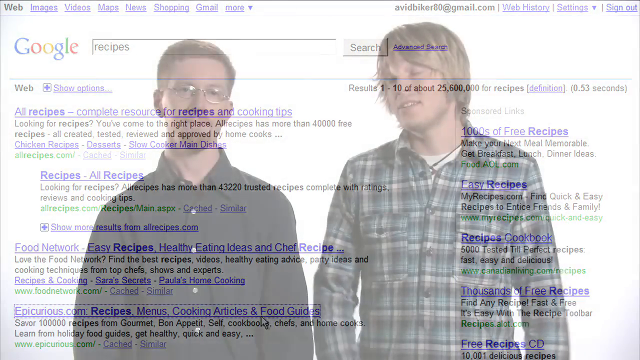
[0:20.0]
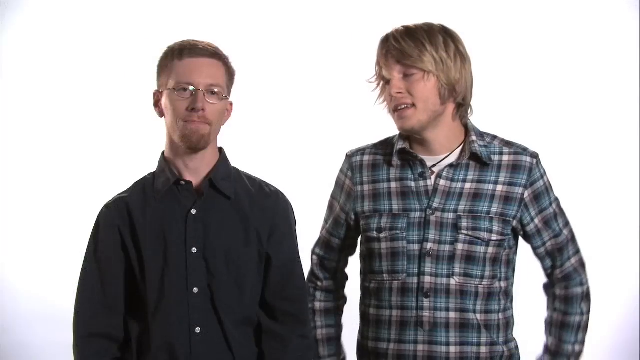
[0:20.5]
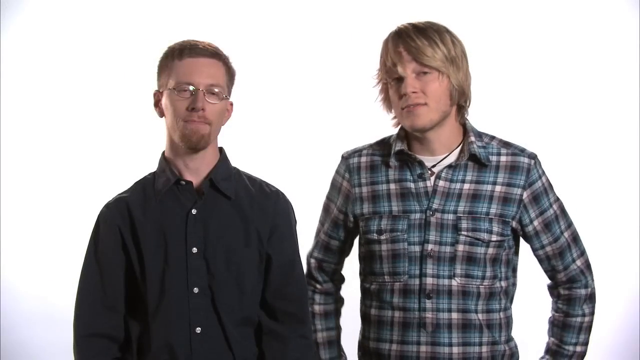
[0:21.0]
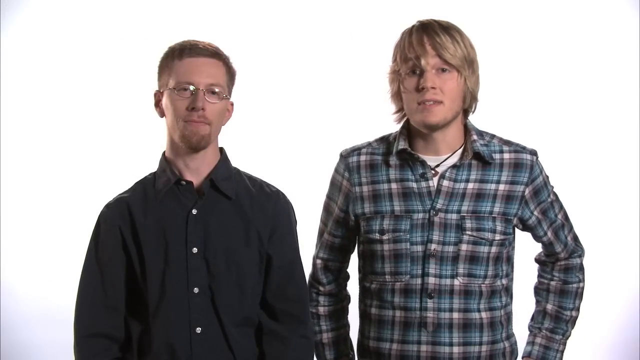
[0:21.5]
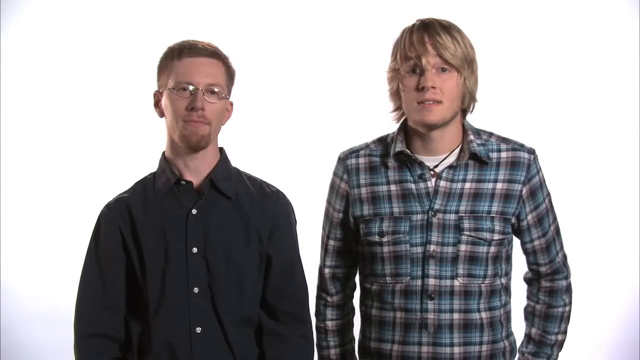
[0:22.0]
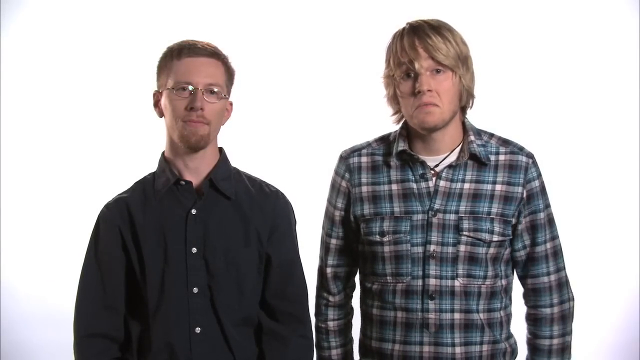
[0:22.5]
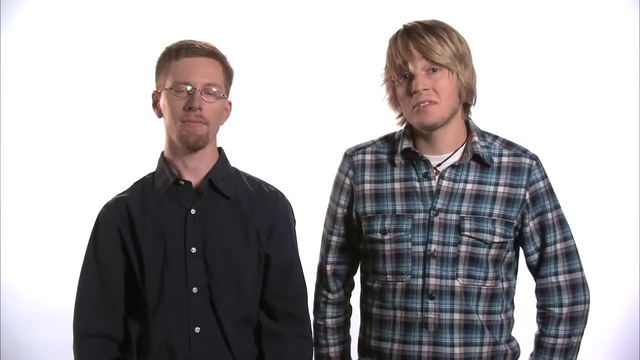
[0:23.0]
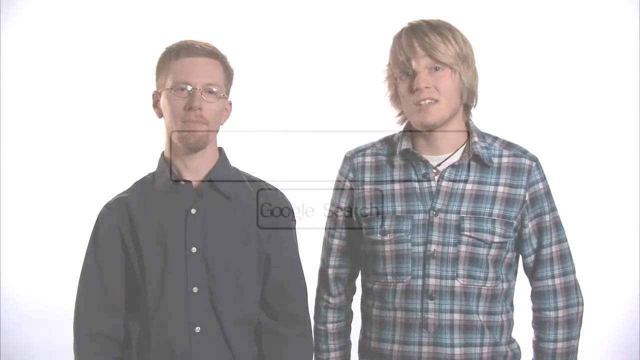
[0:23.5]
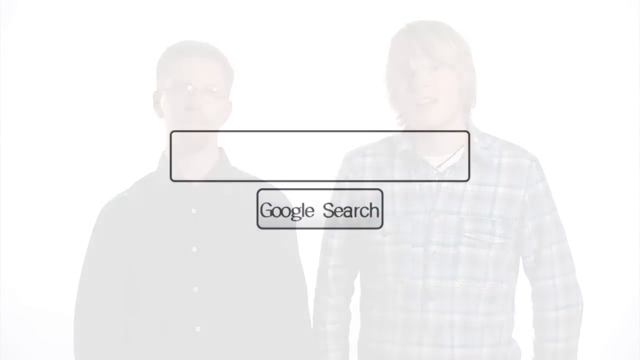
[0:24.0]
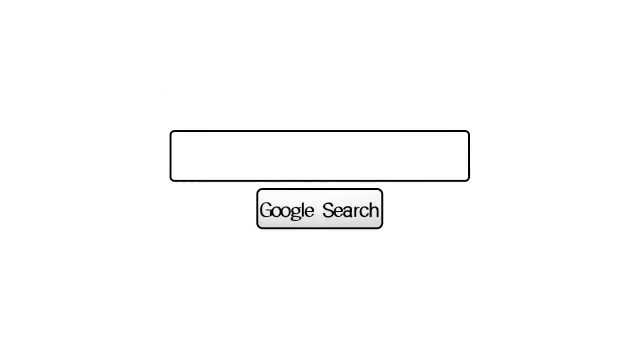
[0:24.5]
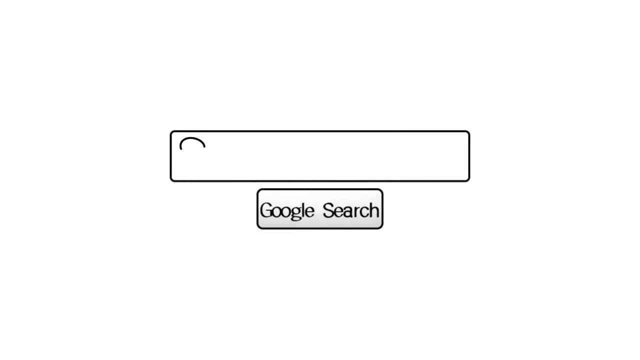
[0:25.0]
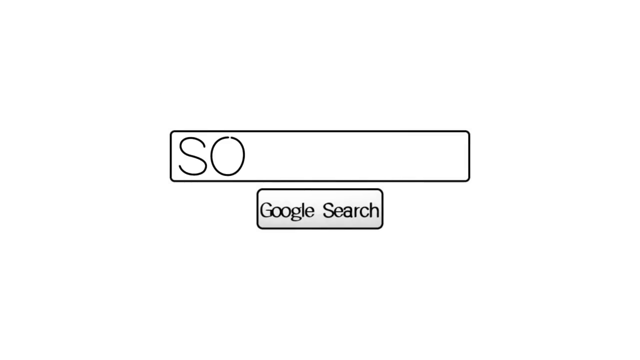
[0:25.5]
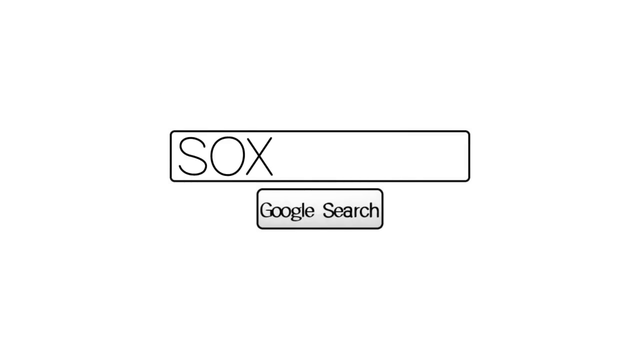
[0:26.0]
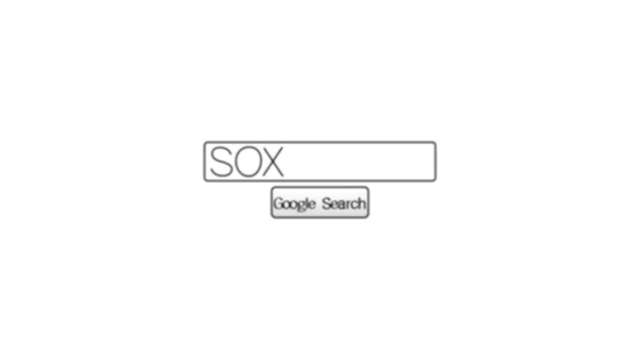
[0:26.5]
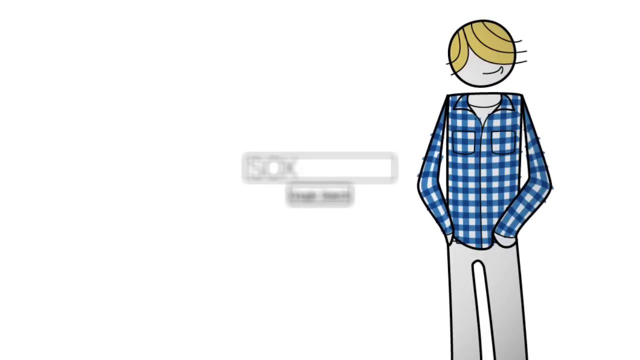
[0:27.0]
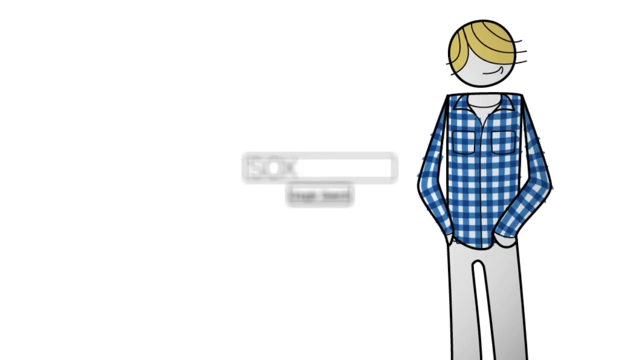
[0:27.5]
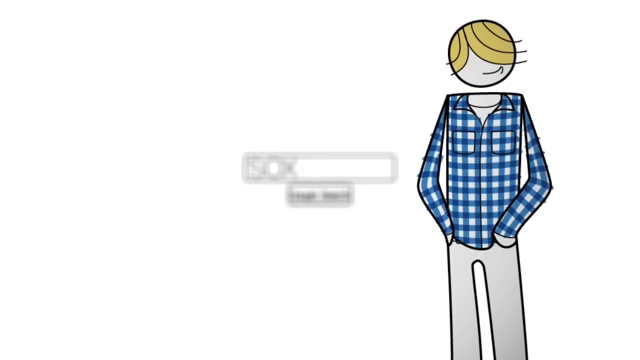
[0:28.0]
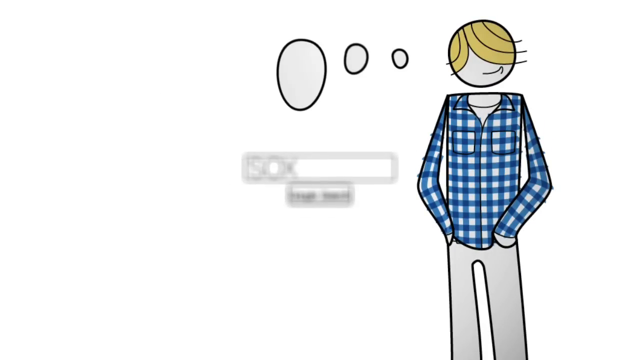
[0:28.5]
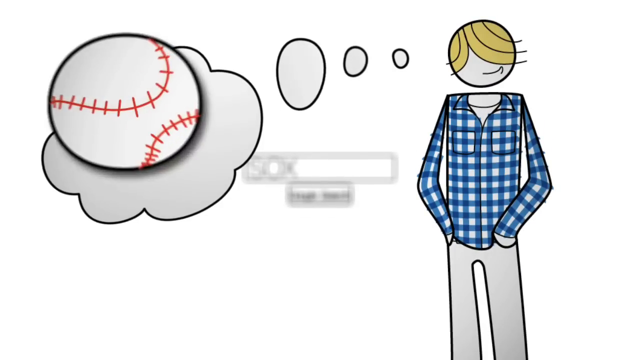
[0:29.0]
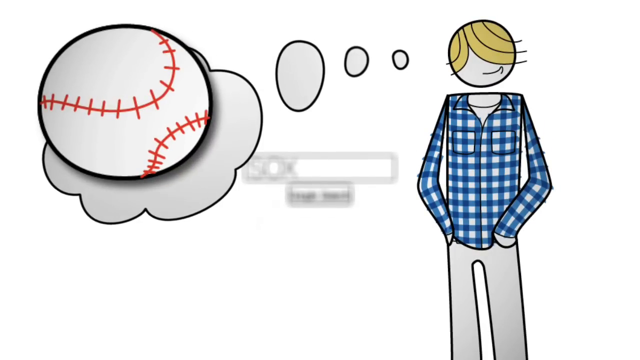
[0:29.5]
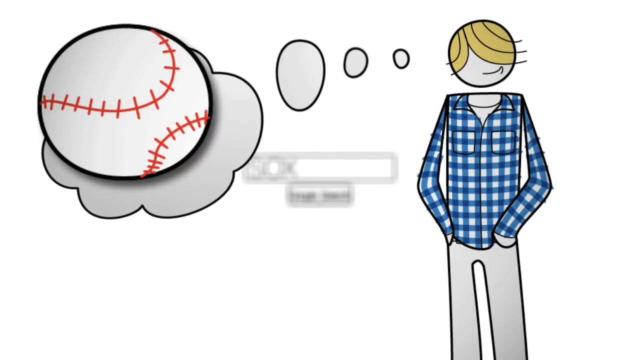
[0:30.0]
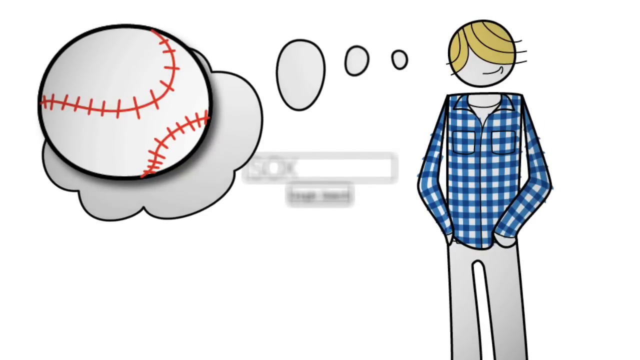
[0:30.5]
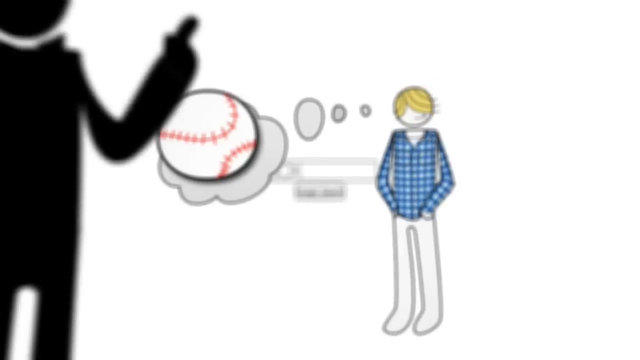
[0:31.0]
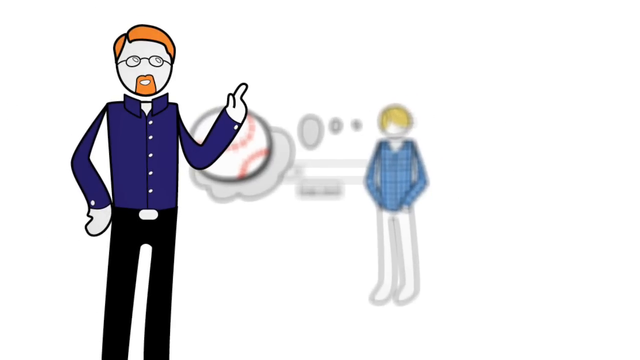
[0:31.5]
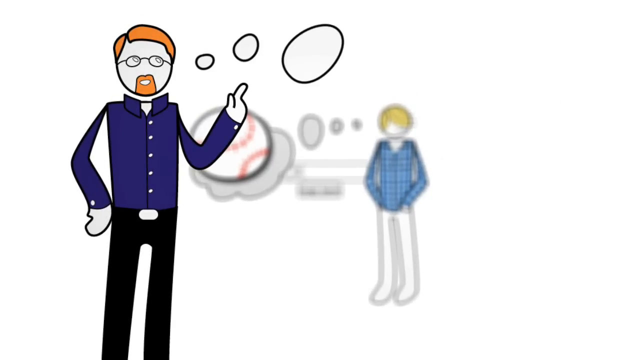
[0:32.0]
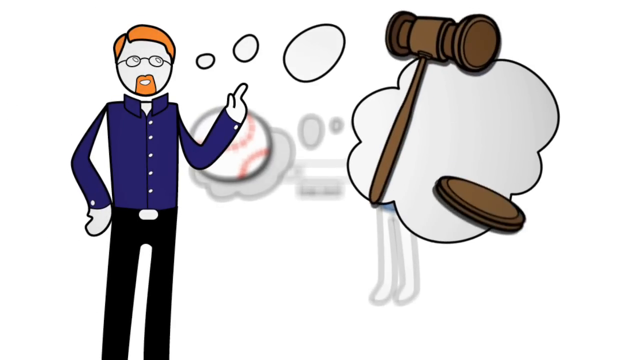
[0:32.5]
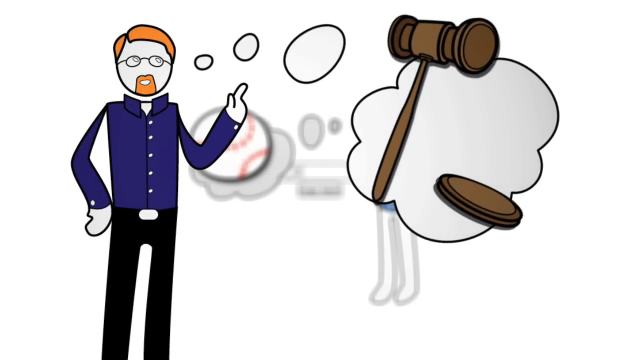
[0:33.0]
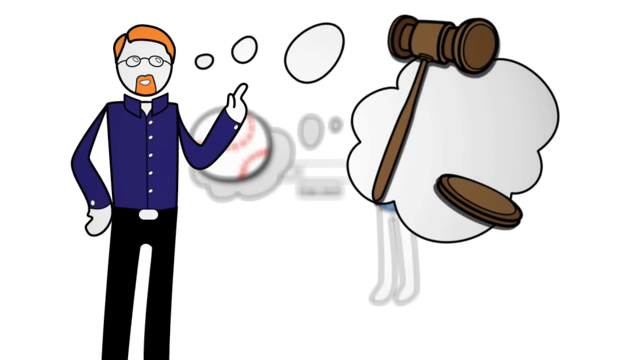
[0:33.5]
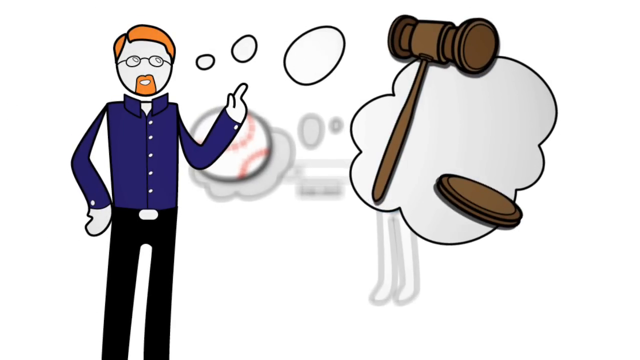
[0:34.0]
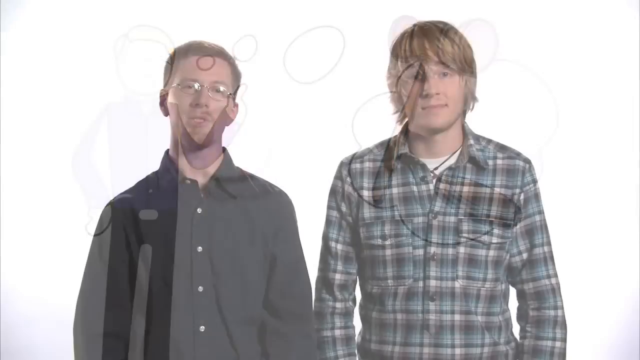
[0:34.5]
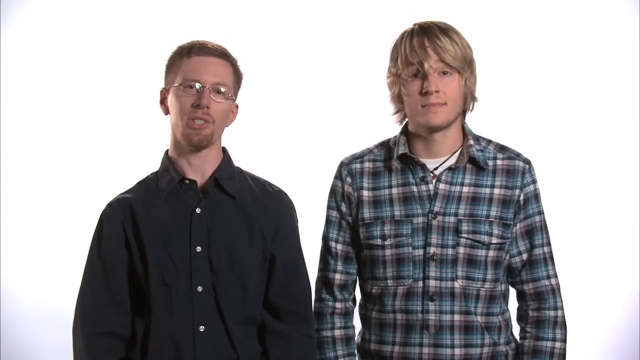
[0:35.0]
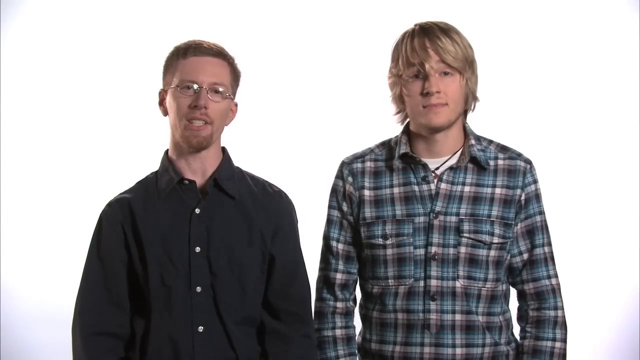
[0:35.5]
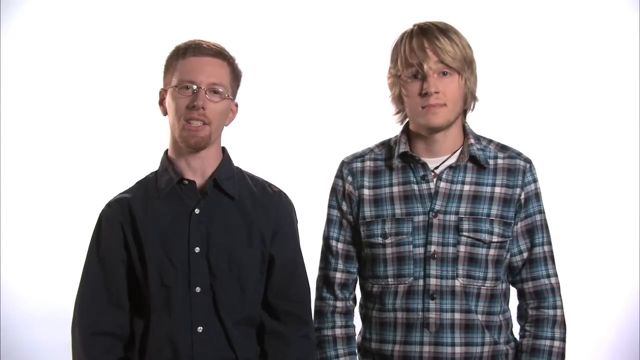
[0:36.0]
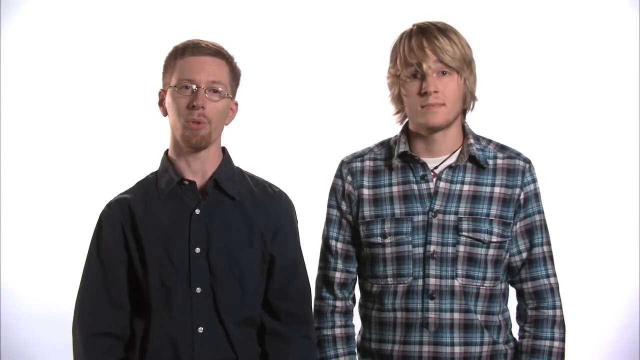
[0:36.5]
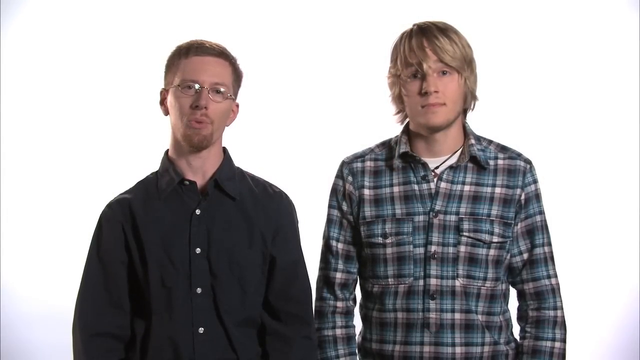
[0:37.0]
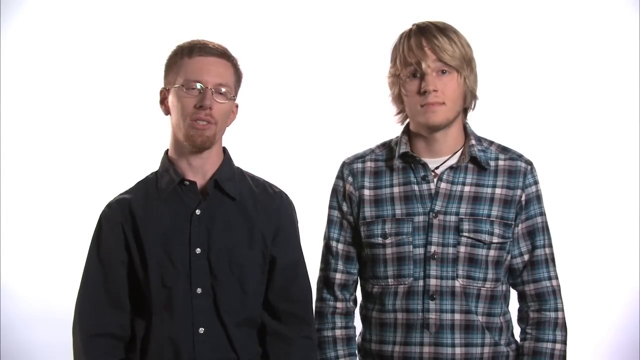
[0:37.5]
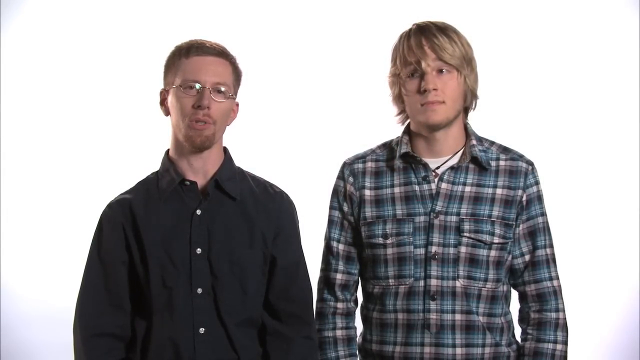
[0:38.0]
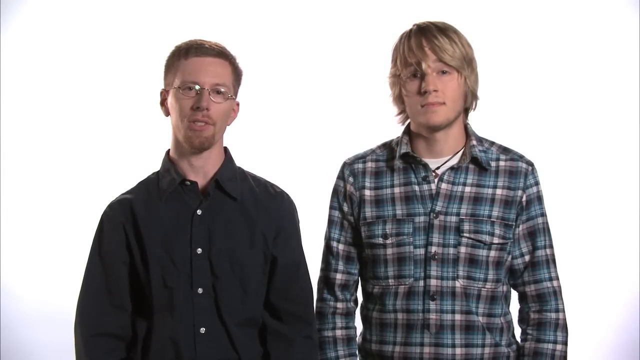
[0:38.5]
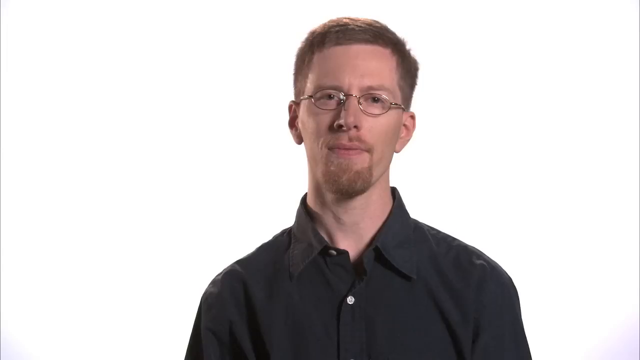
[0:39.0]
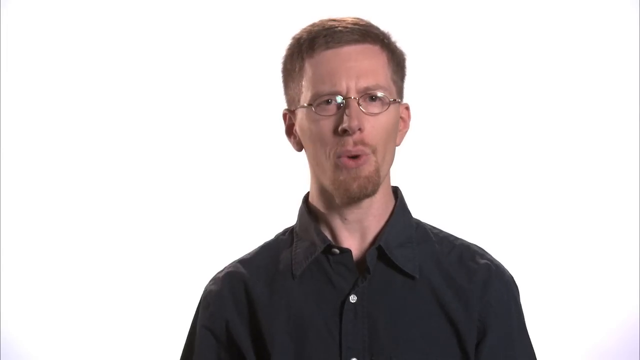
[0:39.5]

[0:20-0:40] The search results fade. Robby's head is slightly turned to the right, and his hands, elbows bent, appear to move and then drop down to his sides. He looks straight at the camera and shifts around as he talks, his left arm going out. A close-up black-and-white image shows the words "Google search" in a rectangle with a larger rectangle above it, and "SOX" is written into the box. A cartoon of Robby appears on the right side with his hands in his pockets. Little circles form a call-out leading to a big cloud containing a baseball image, and the baseball jumps out. The view zooms out and that part is blurred, and a cartoon of Brian appears on the left side, looking to his upper left, his right hand on his hip and his left index finger pointing up. Call-out bubbles appear for him, and a judge's mallet pops out of the call-out. The video cuts back to the two men side by side, with Brian talking, and then to a close-up of him.